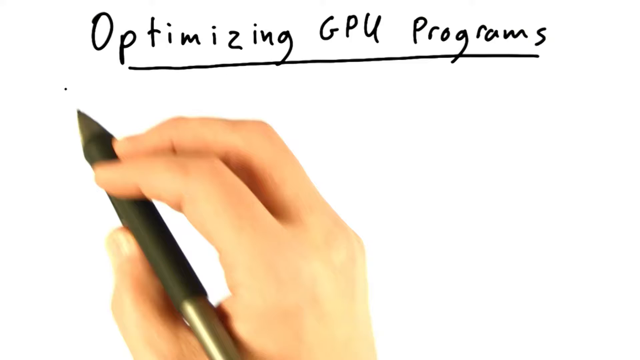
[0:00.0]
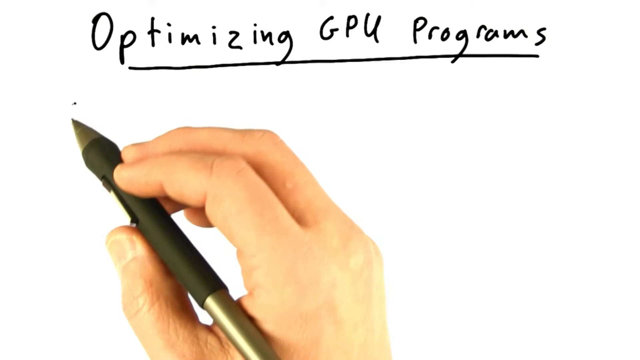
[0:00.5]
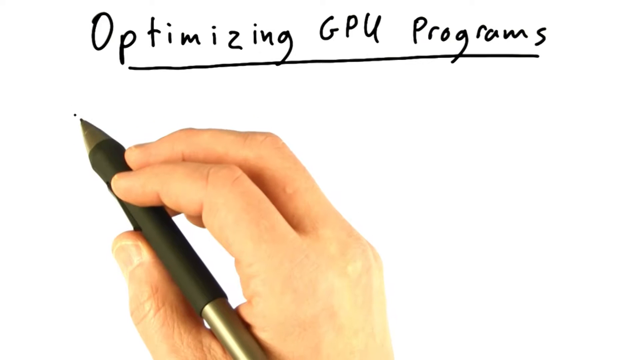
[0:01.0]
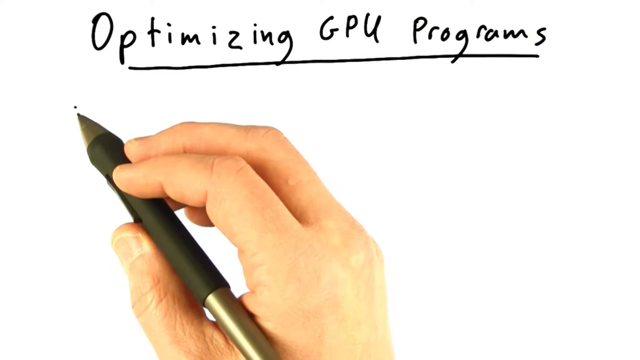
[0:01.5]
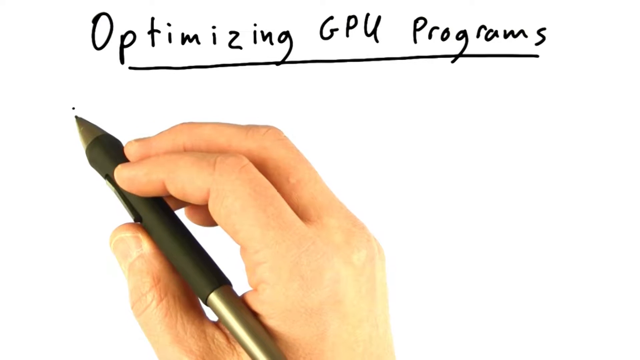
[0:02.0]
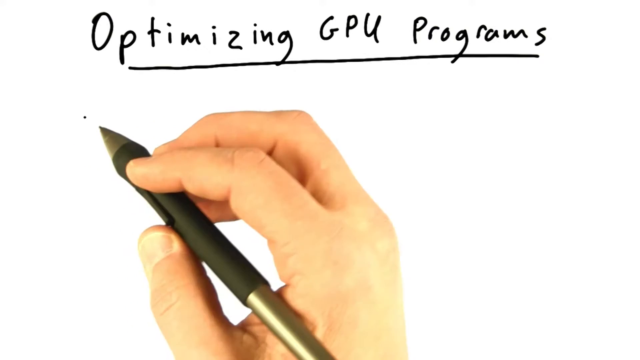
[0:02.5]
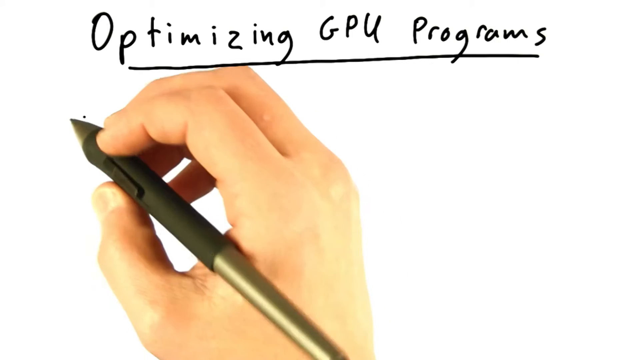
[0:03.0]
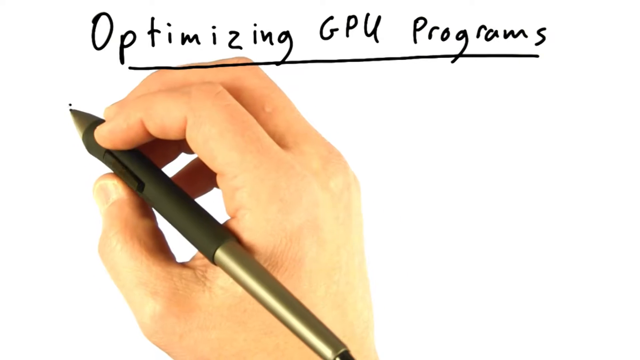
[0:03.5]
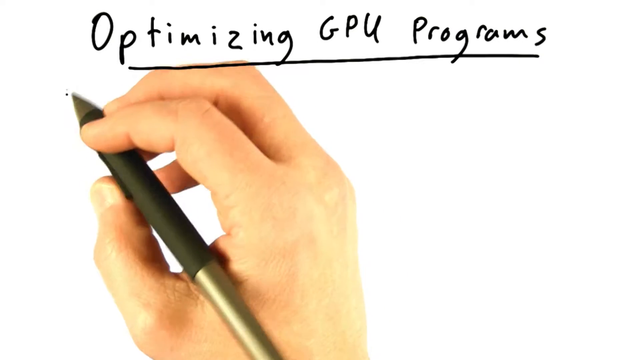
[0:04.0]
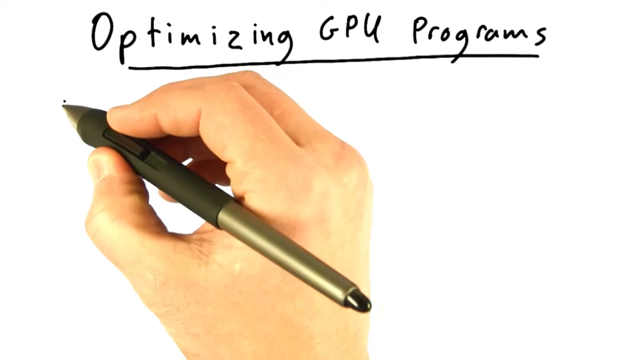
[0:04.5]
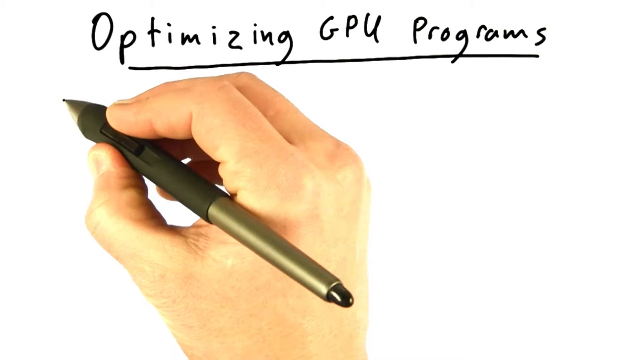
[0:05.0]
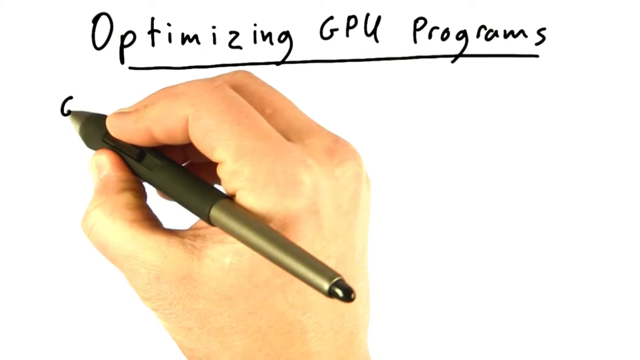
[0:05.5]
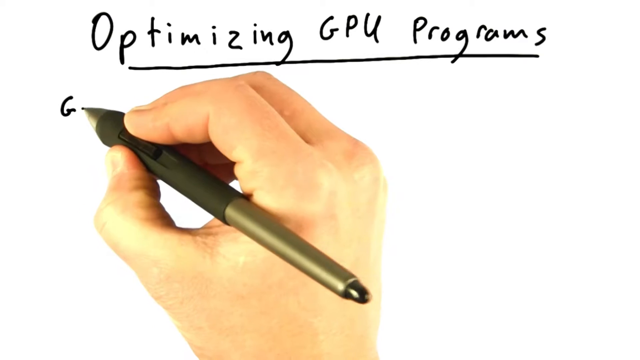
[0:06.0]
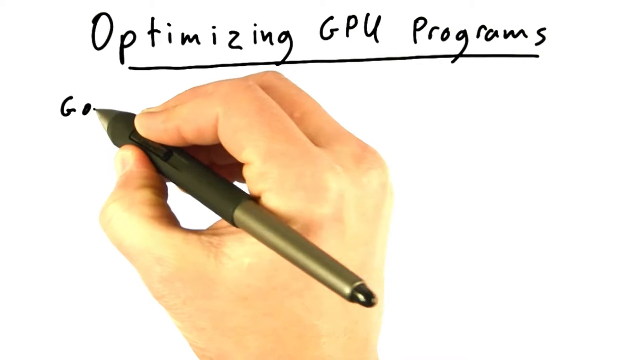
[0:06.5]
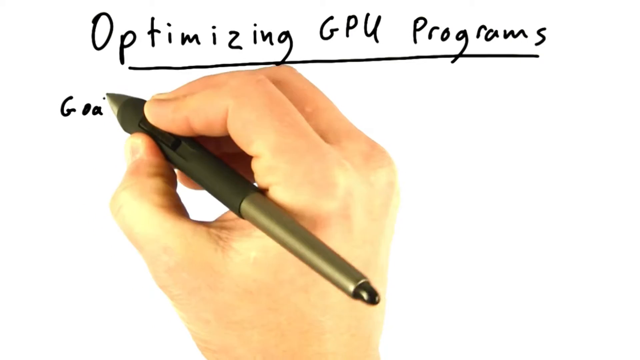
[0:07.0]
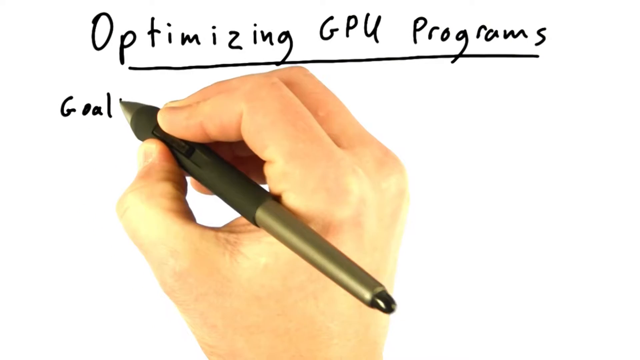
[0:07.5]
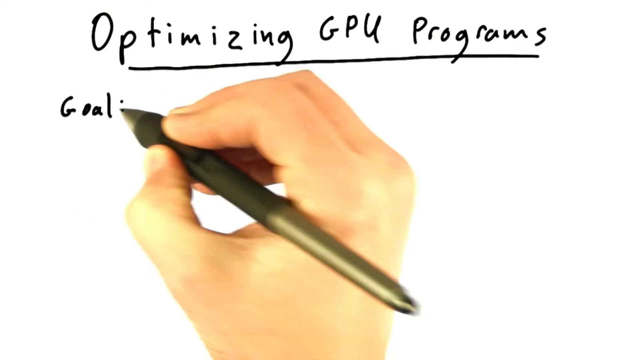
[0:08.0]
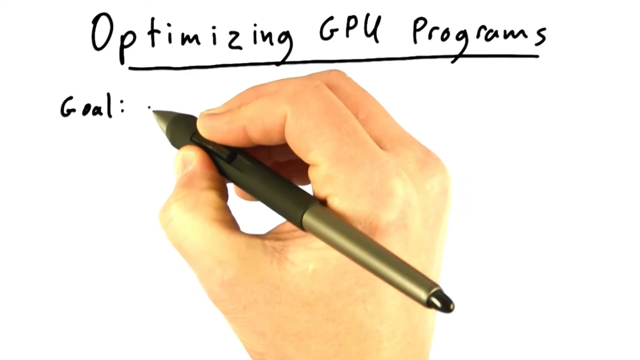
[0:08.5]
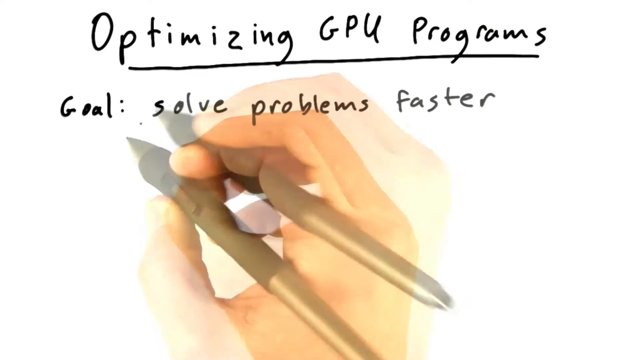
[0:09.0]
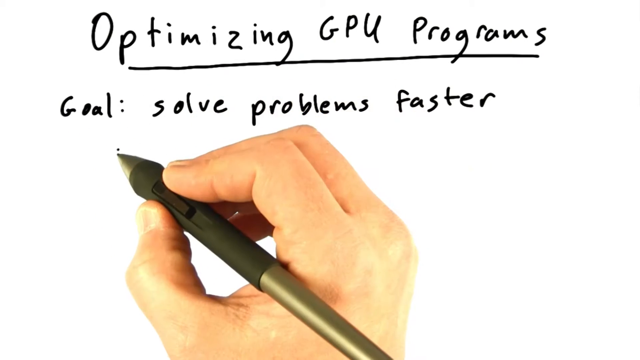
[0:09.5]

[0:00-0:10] The screen has a white background with an ombre black effect toward the bottom. At the top centre, the words "Optimising GPU Programmes" are handwritten and underlined. Below that, toward the left-hand side of the screen, a person's right hand is visible: their thumb and two fingers hold a black pen. They raise the hand toward the top of the screen, point the pen at the paper and begin writing "goal .. solve problems faster".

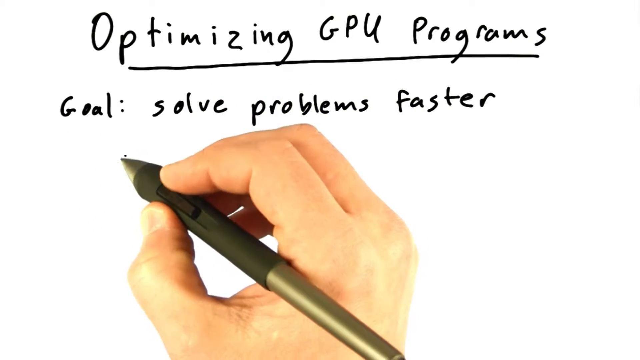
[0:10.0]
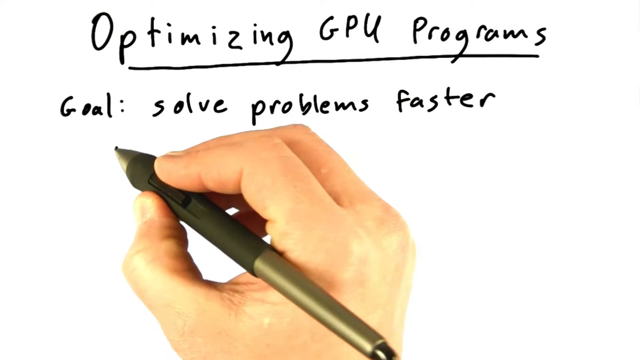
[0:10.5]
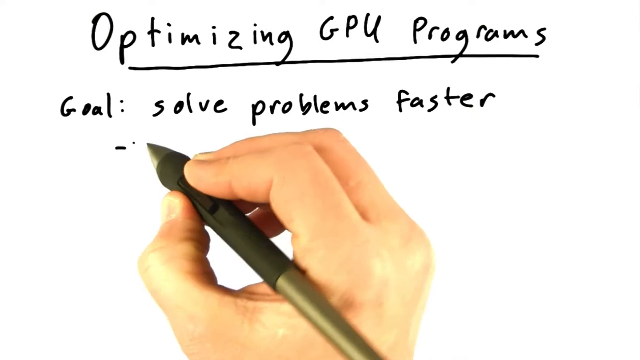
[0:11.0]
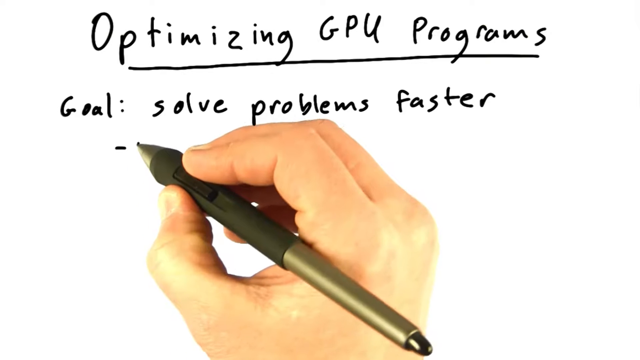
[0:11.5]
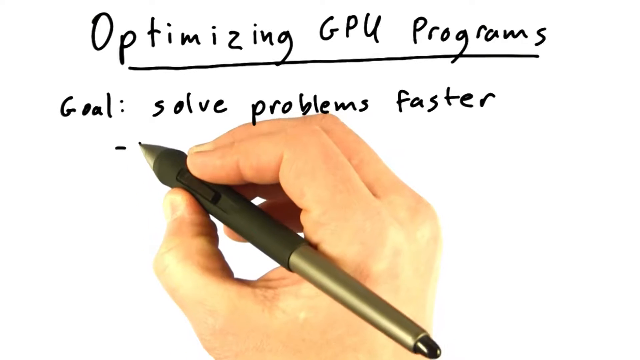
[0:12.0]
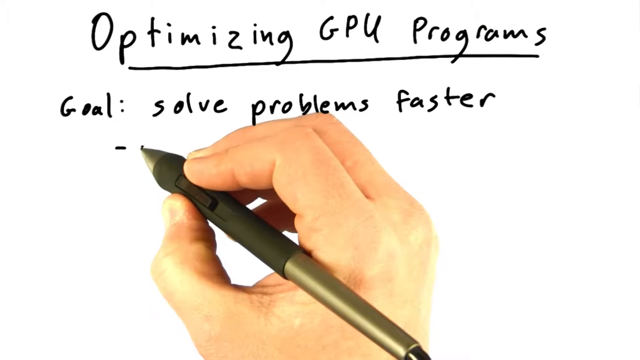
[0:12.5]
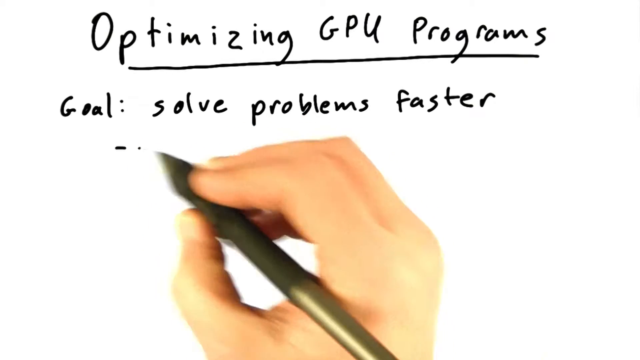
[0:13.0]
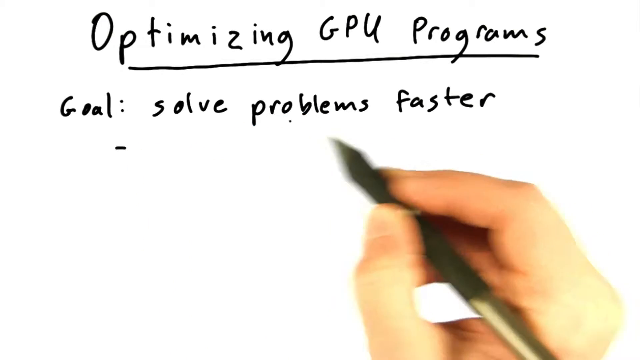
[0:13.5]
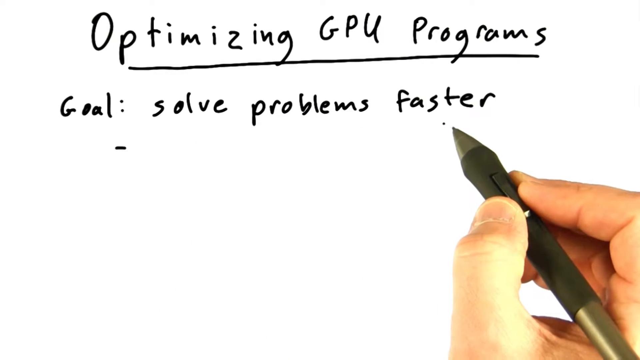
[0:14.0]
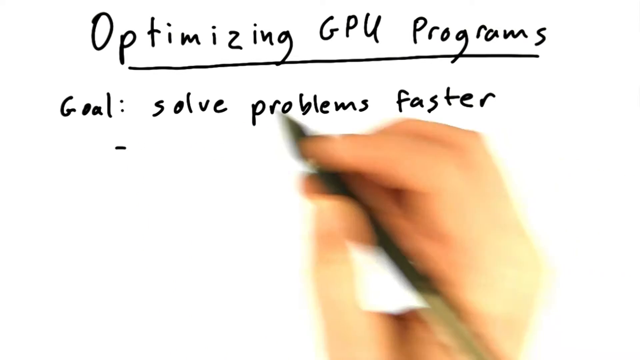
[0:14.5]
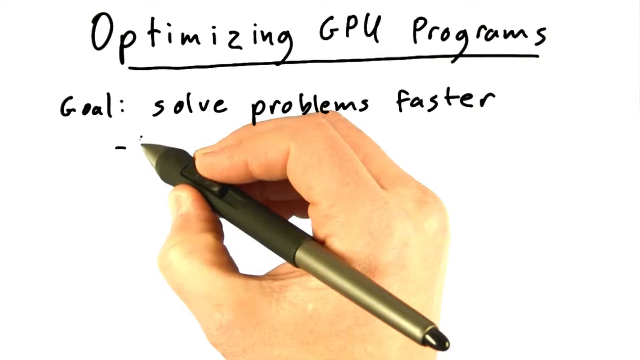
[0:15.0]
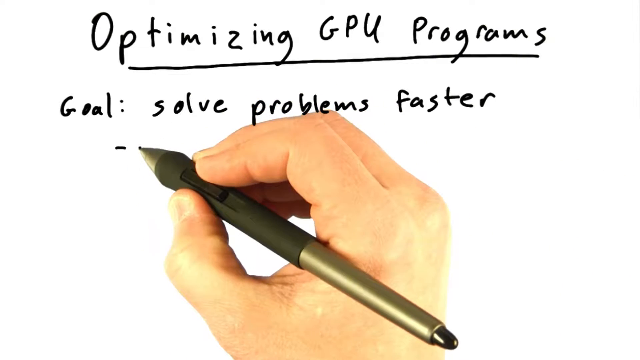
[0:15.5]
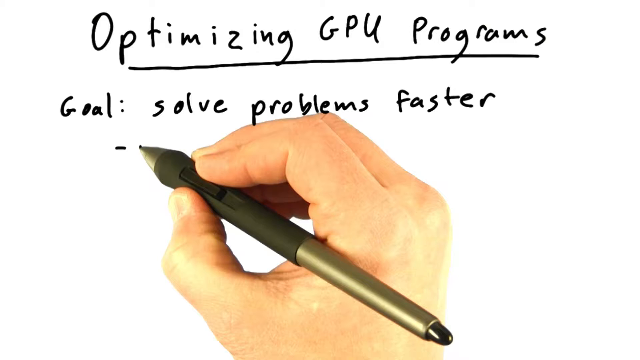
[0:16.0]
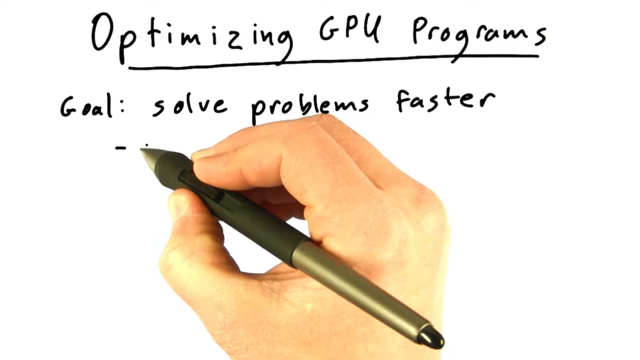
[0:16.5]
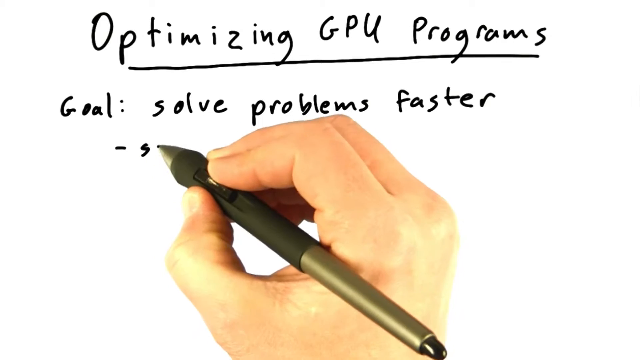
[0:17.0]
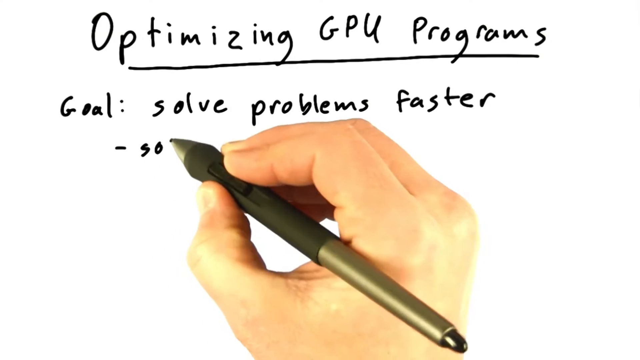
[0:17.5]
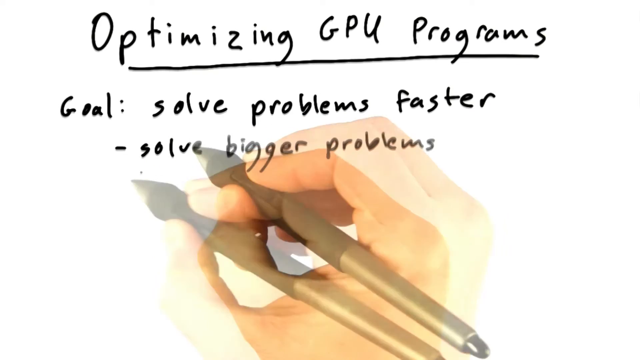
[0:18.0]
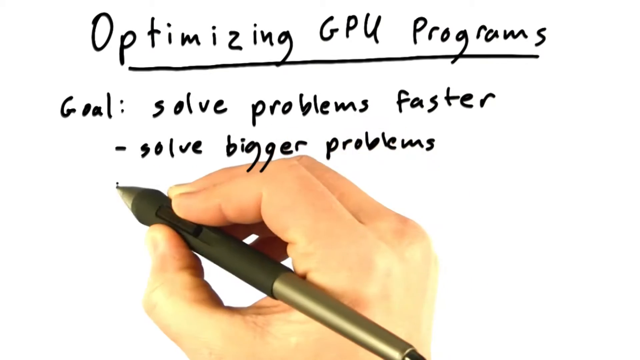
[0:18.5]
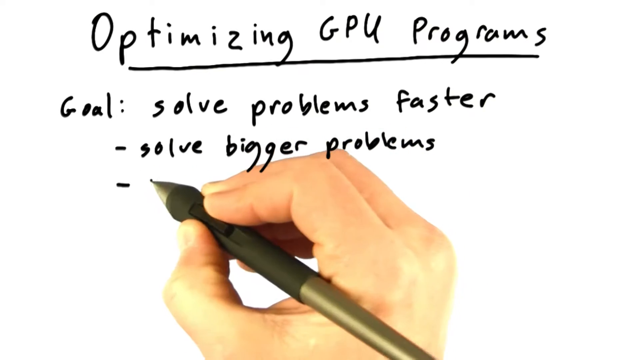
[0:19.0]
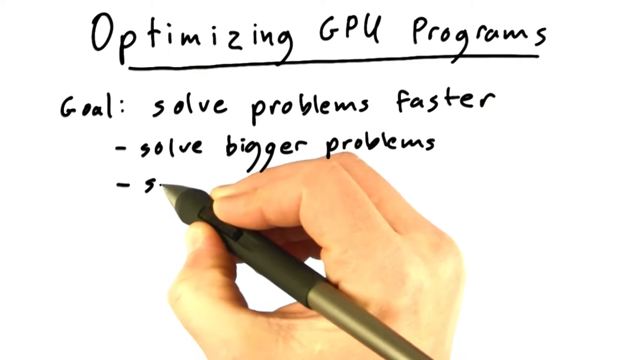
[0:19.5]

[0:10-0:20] More words are written. Underneath "goal .. solve problems faster", the person writes "- solve bigger problems" and then begins another line with a dash. The pen and hand are in the middle of the screen toward the bottom section. The thumb holds the pen together with four fingers, though only the little finger and the finger to its left are visible in the background. The tip of the pen is a lighter shade of black, and the end of the pen is the same lighter shade, with a fully black centre piece.